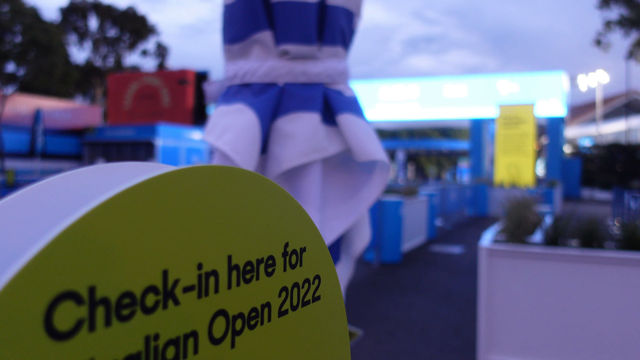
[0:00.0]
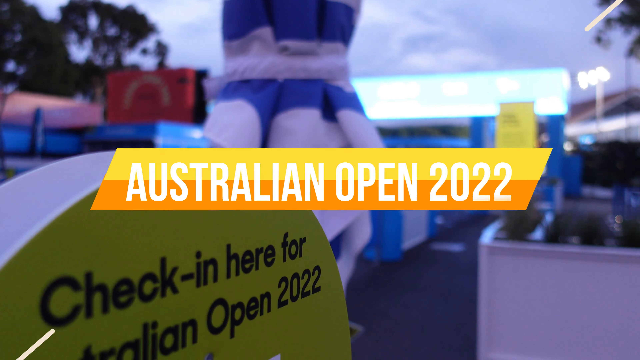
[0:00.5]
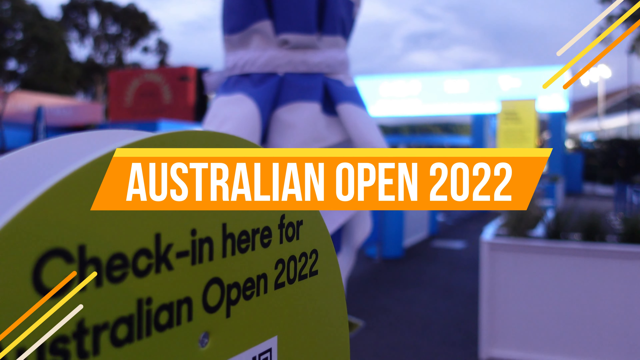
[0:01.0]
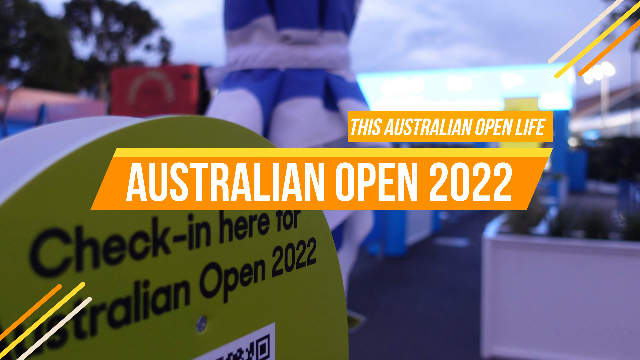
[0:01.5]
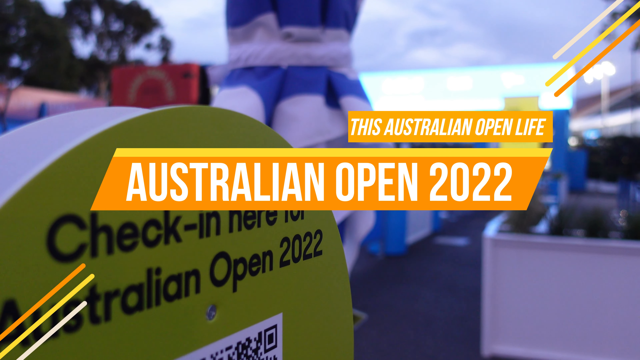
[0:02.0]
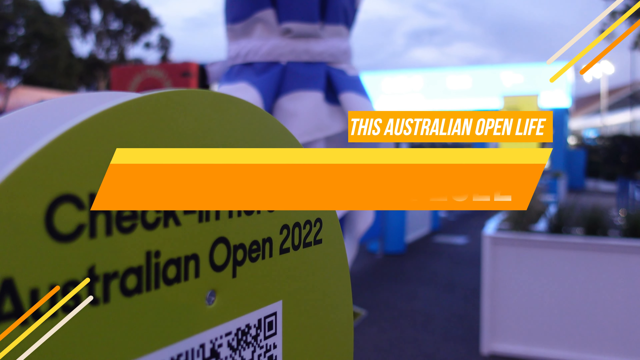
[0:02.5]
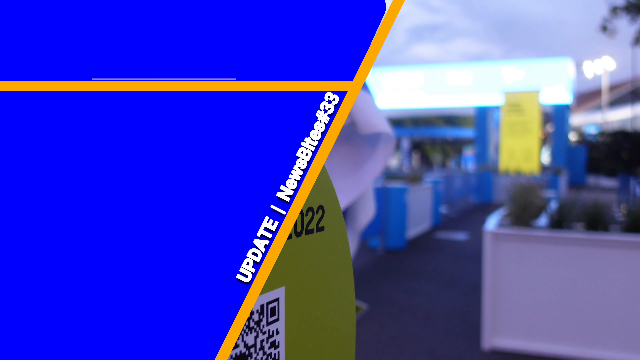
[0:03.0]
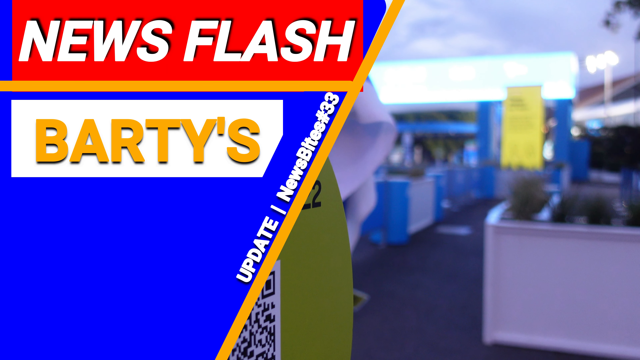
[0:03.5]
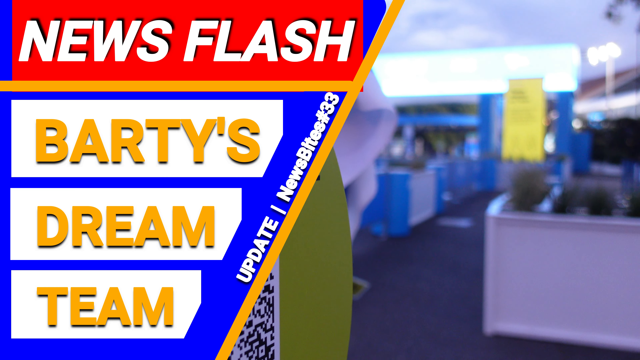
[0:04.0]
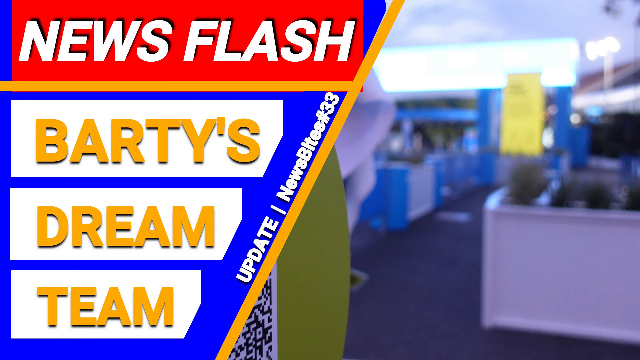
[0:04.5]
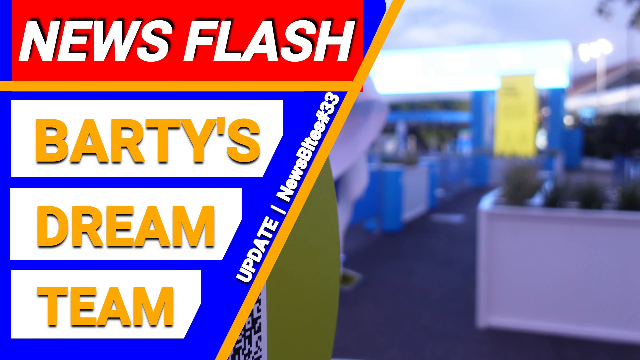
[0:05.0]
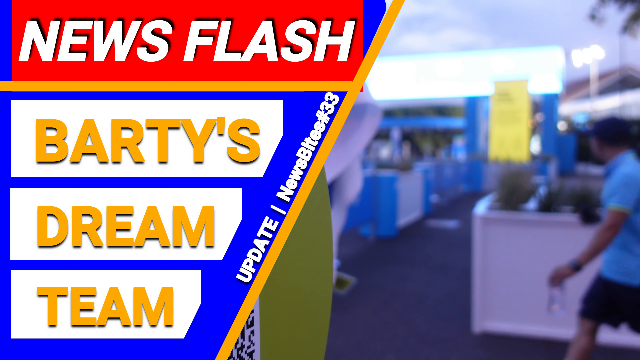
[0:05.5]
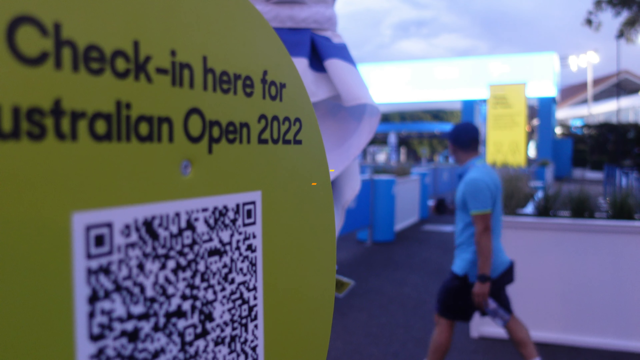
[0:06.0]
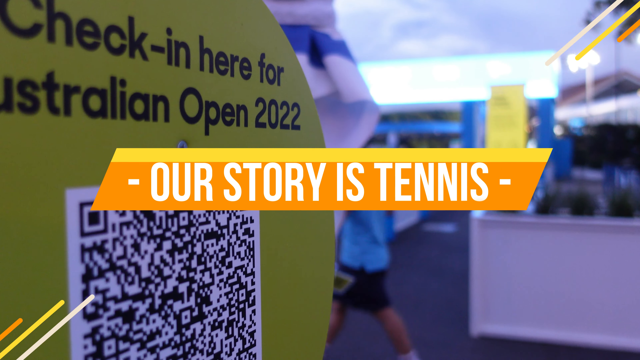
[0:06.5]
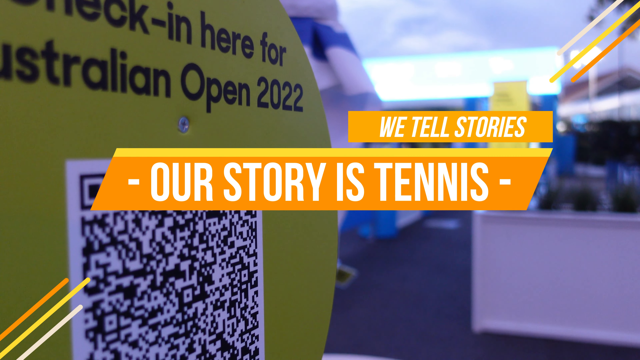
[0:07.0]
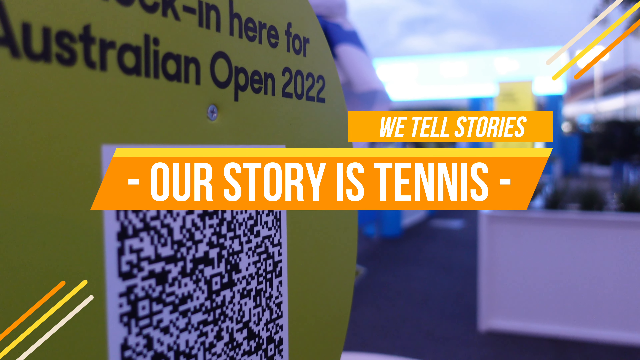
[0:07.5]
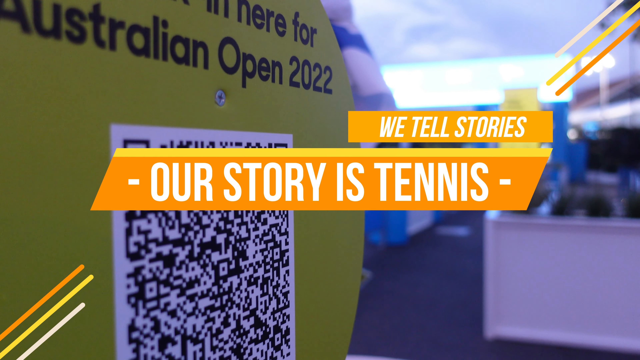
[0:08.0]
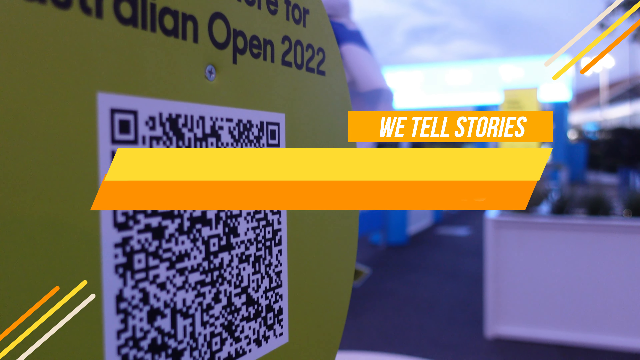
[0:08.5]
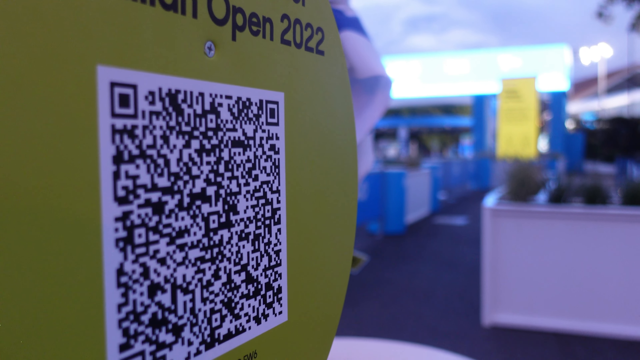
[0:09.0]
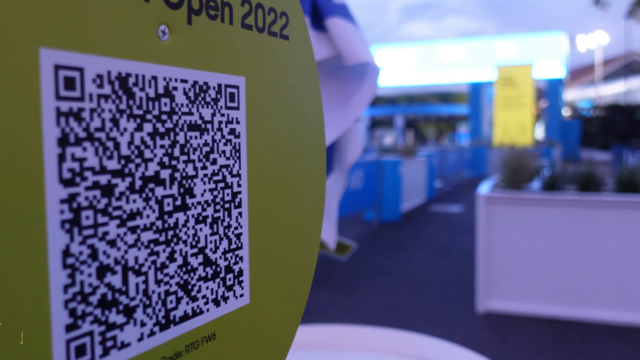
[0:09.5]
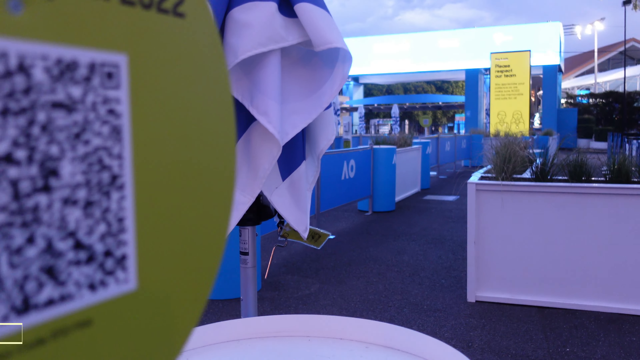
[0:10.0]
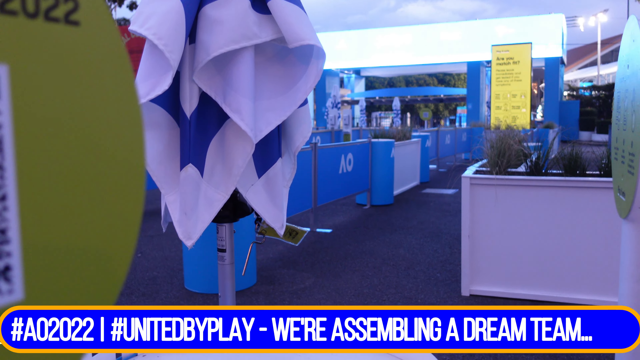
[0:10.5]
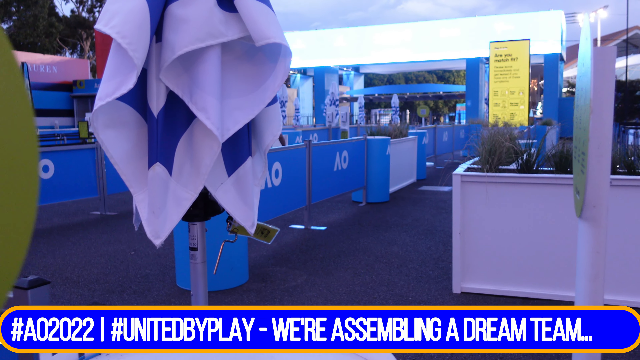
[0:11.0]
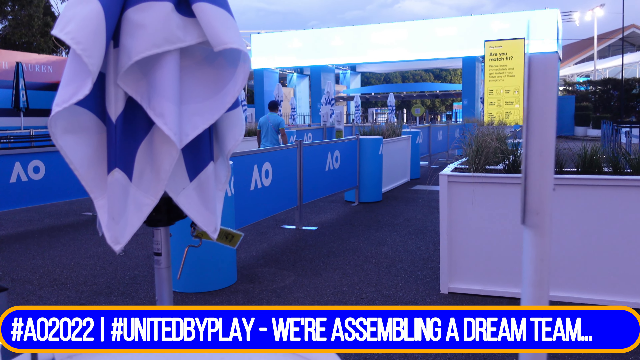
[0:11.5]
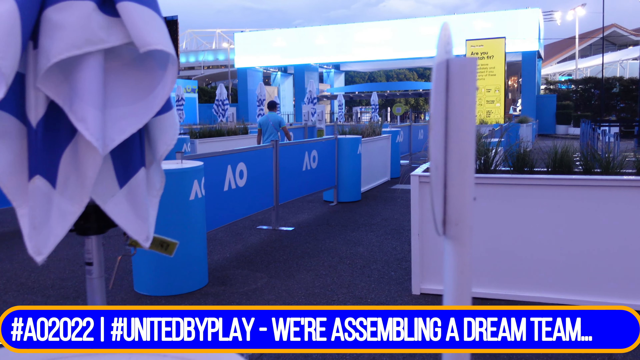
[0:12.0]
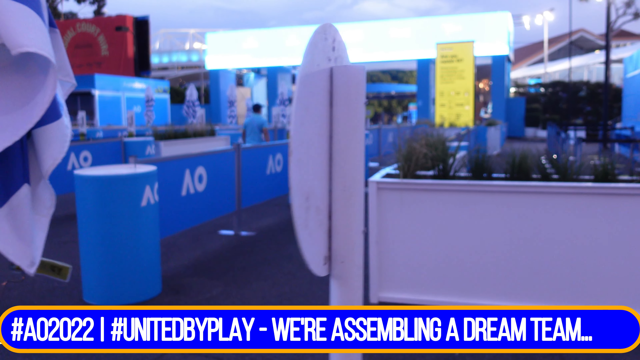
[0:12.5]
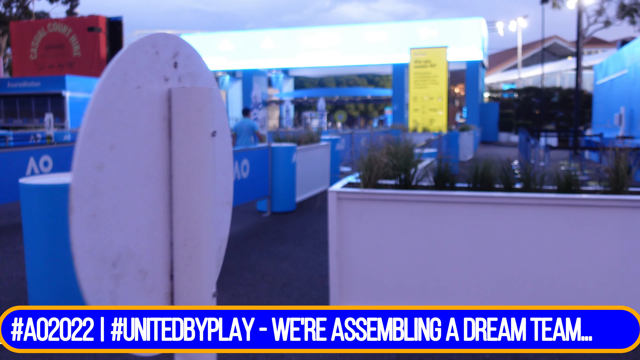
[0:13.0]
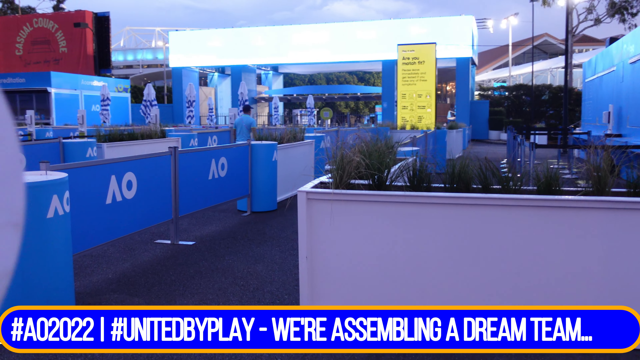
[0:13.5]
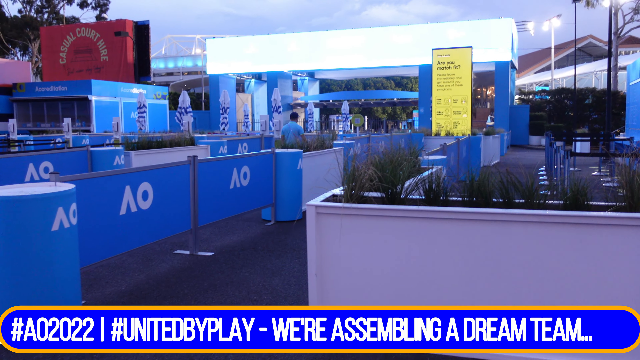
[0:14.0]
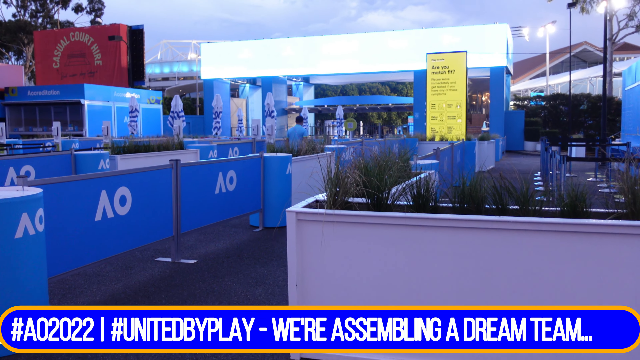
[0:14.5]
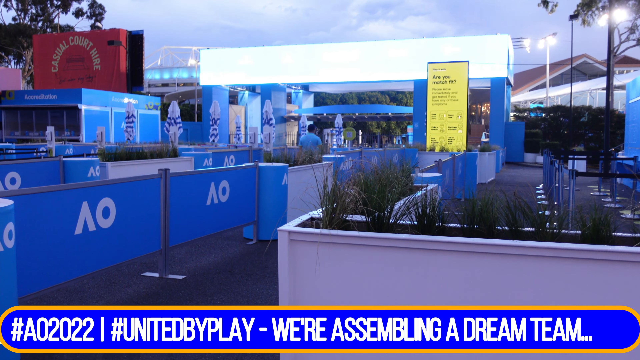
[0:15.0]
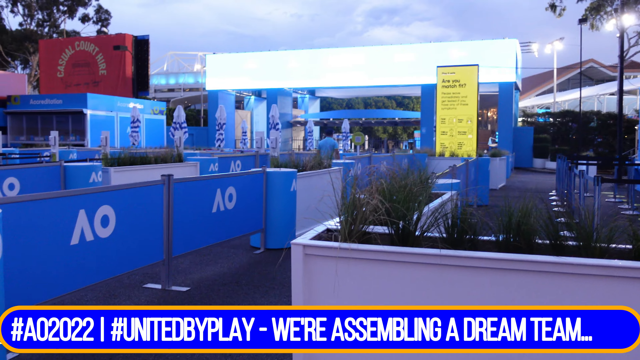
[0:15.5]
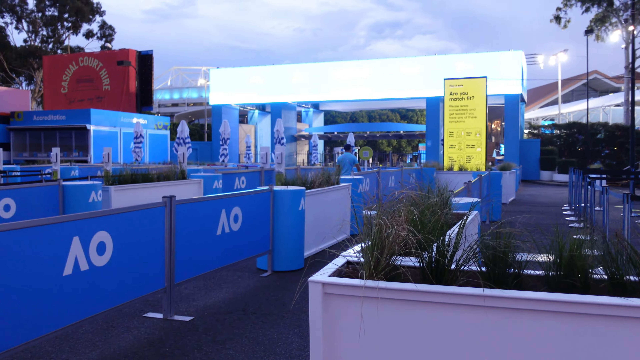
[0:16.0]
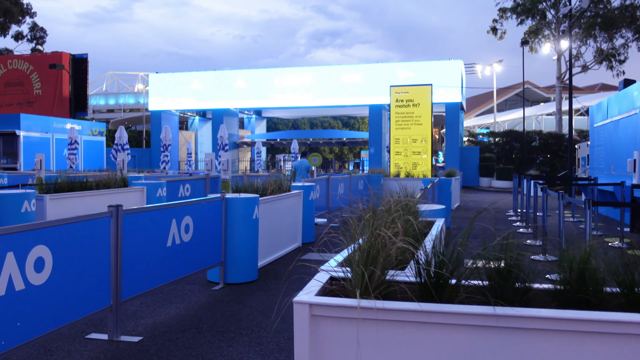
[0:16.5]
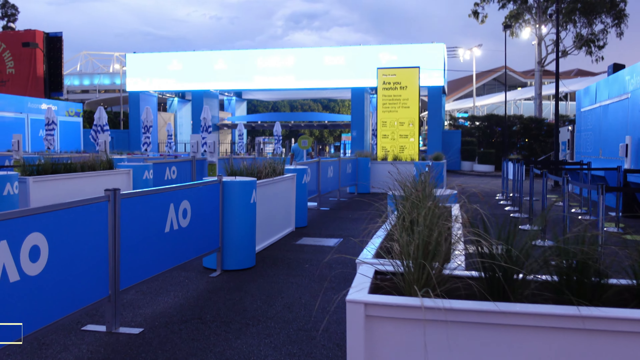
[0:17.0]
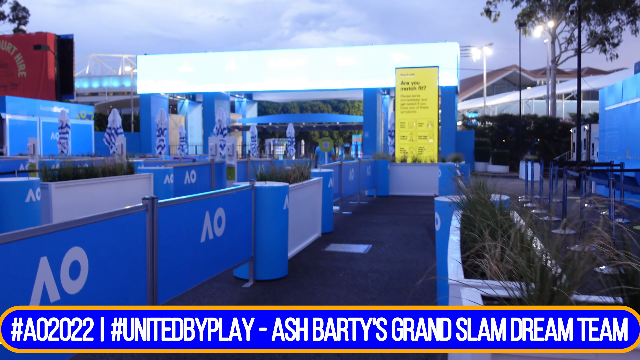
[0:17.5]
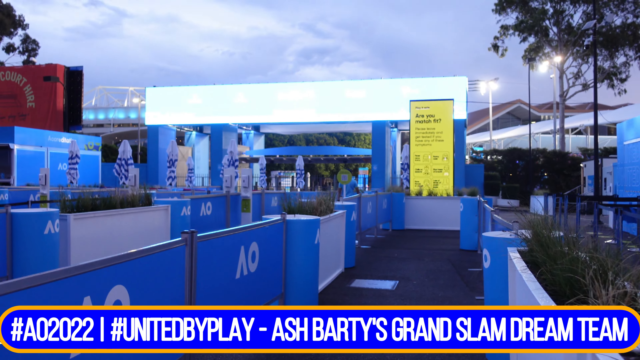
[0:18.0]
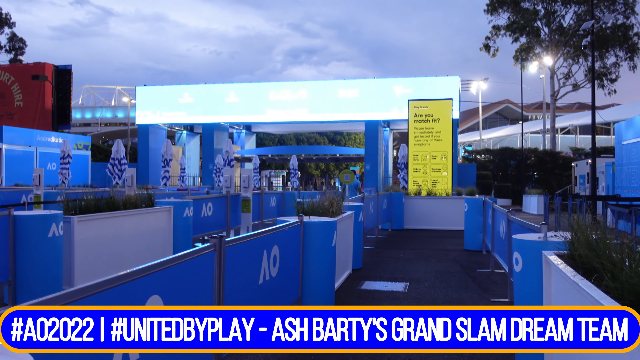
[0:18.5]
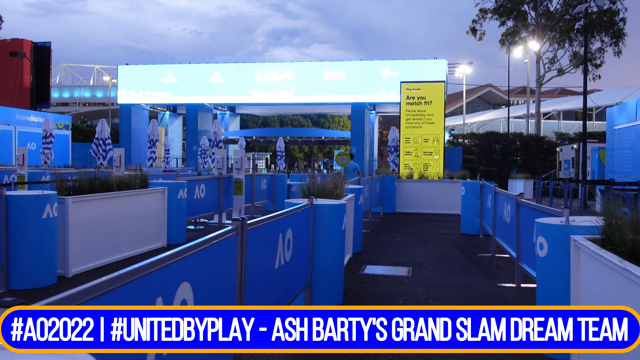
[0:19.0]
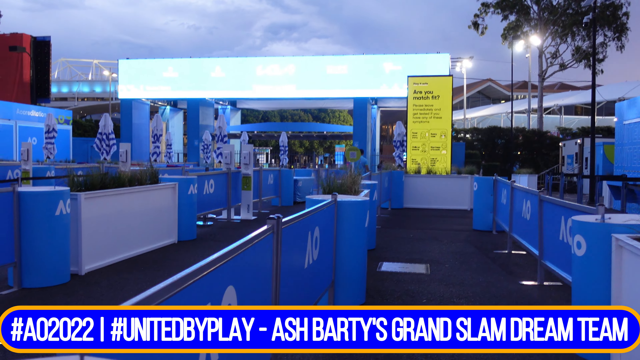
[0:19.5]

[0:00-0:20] The video opens with a text banner reading "Australian Open 2022", with what seem to be check-in lines for the Australian Open in the background. A banner above the larger "Australian Open 2022" banner reads "This Australian Open life". It looks like a news video or newsflash, and text on the video reads "Newsflash Barty's dream team update news bites number 33". A man in a blue shirt walks past. Another title appears reading "Our story is tennis", and "We tell stories" is also written on the video. Check-in lines with blue banners and stalls for the Australian Open are visible, along with about eight or nine closed umbrellas in different areas. A heading at the bottom reads "#A02022 #united by play. We're assembling a dream team...". Someone walks with the camera around the location, showing the different empty lines. Apart from the man in the blue shirt who walked across, there are no people in the video.